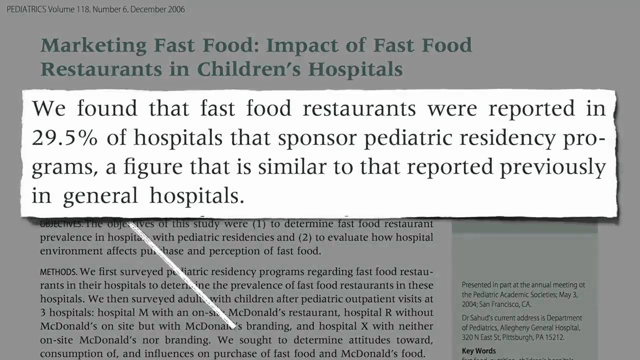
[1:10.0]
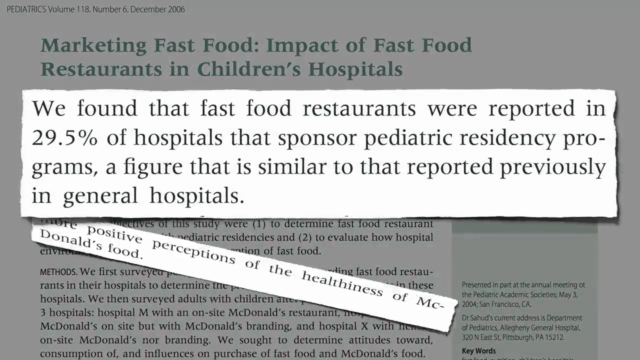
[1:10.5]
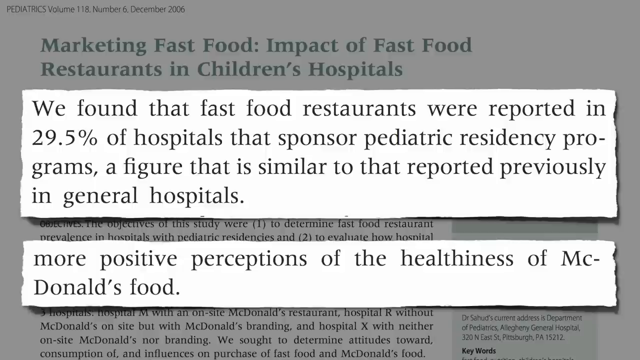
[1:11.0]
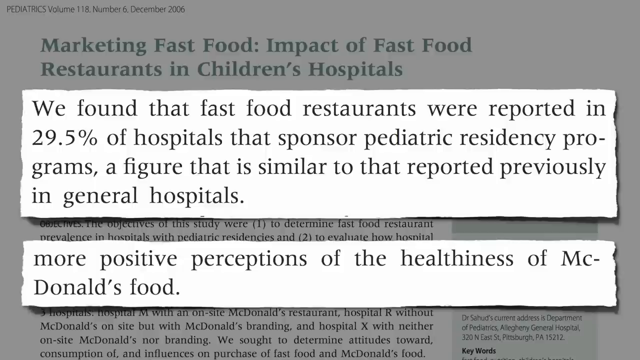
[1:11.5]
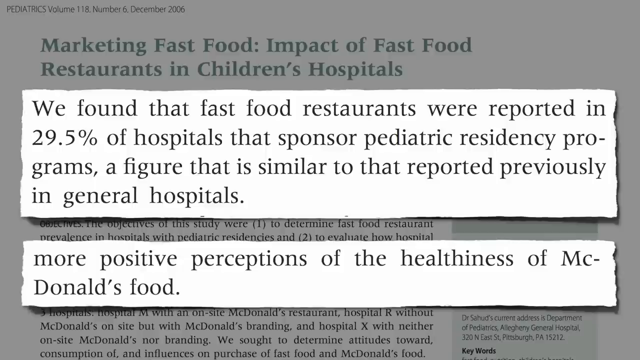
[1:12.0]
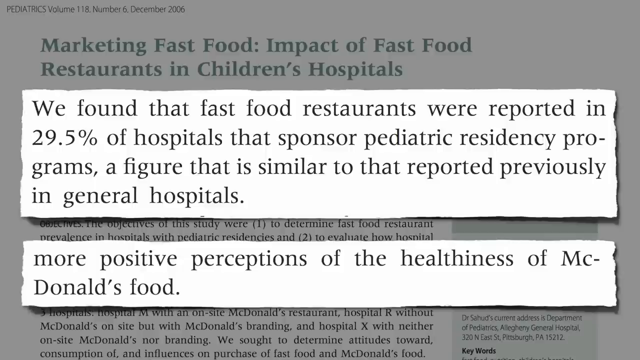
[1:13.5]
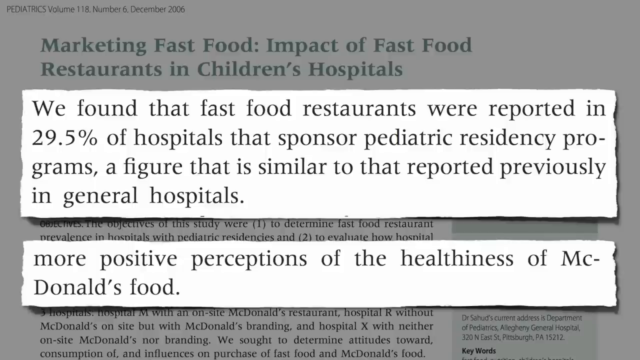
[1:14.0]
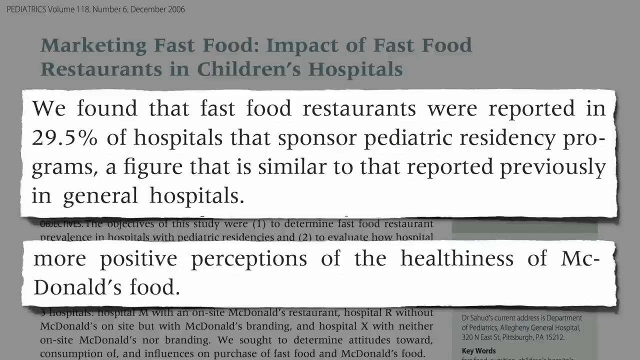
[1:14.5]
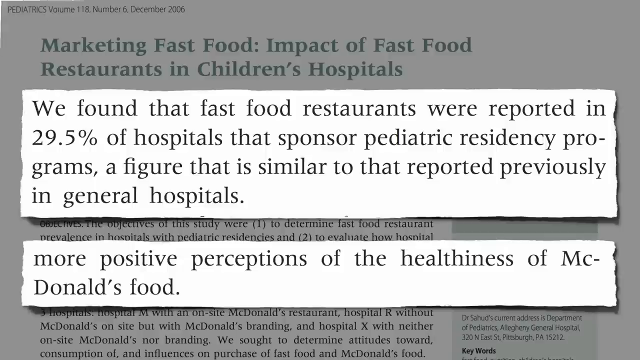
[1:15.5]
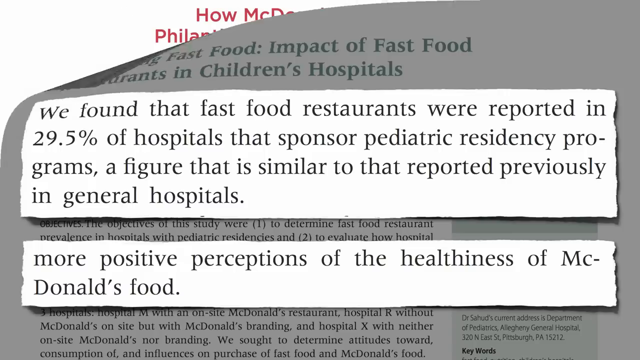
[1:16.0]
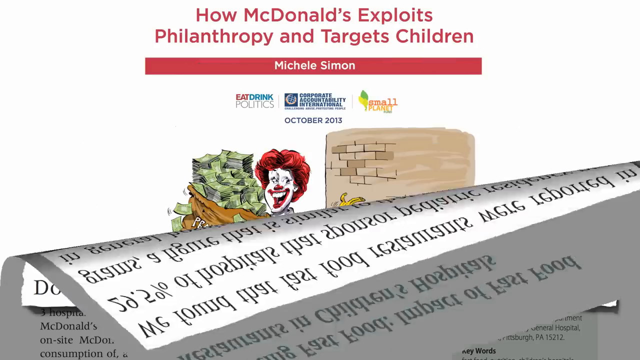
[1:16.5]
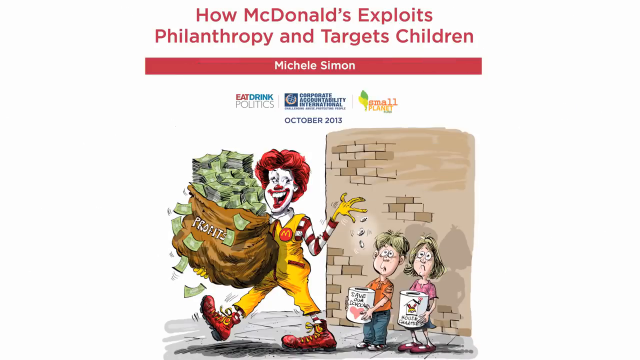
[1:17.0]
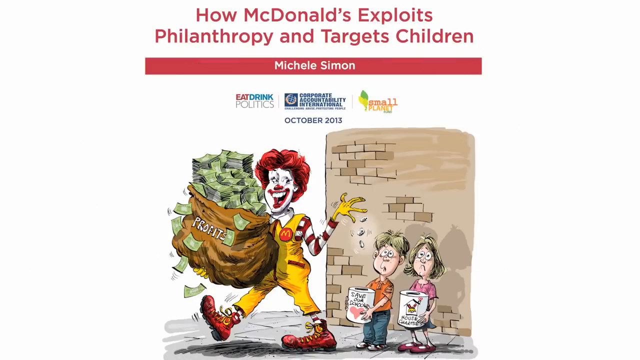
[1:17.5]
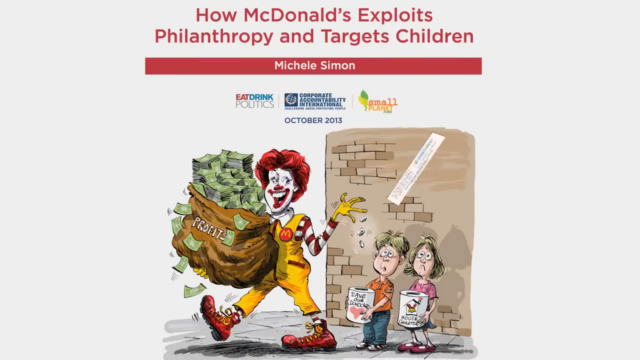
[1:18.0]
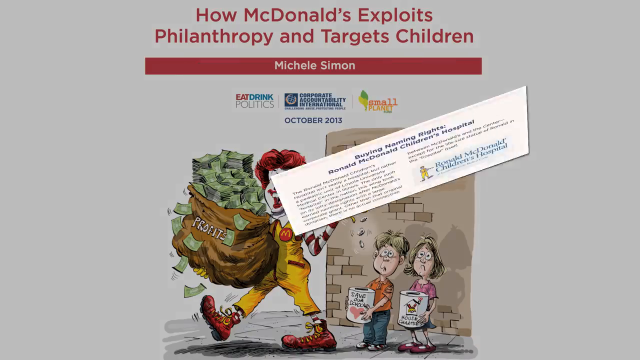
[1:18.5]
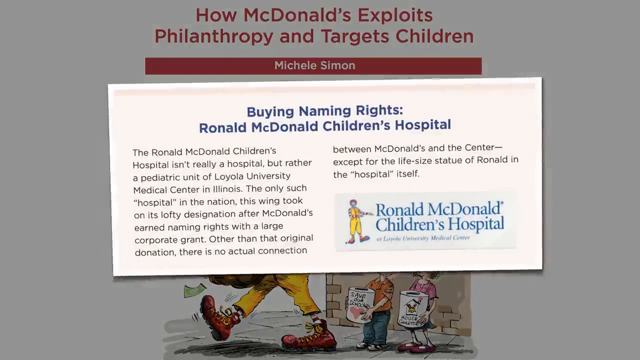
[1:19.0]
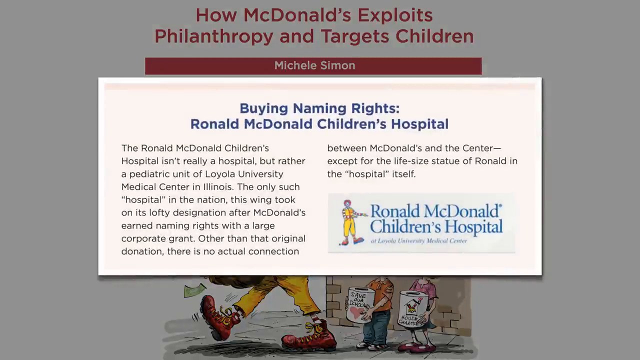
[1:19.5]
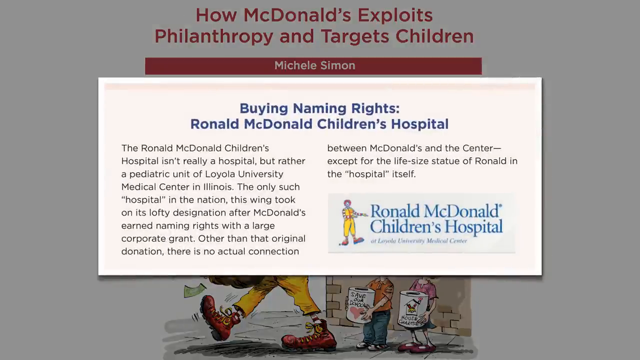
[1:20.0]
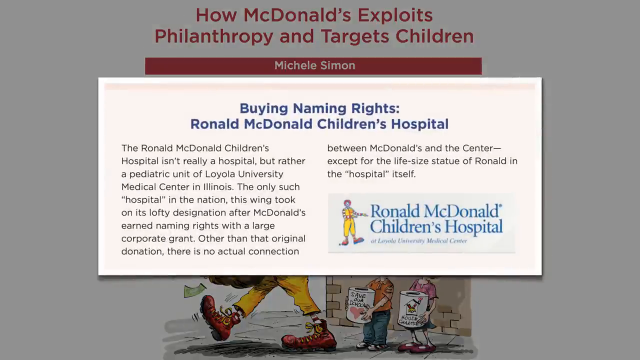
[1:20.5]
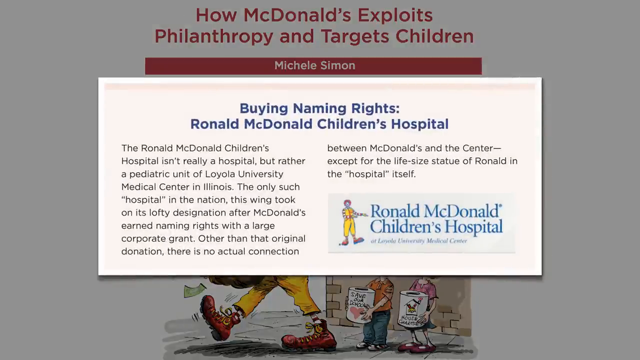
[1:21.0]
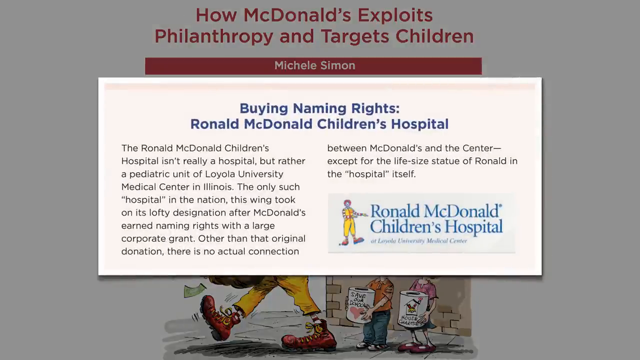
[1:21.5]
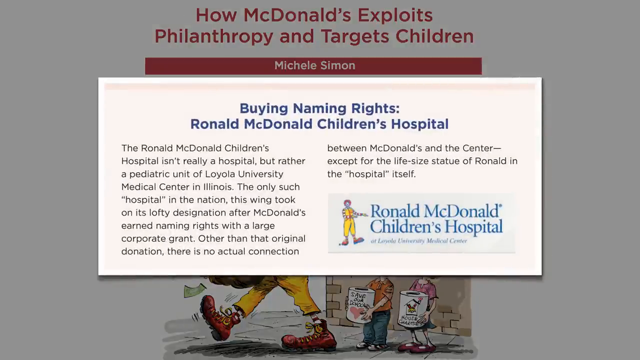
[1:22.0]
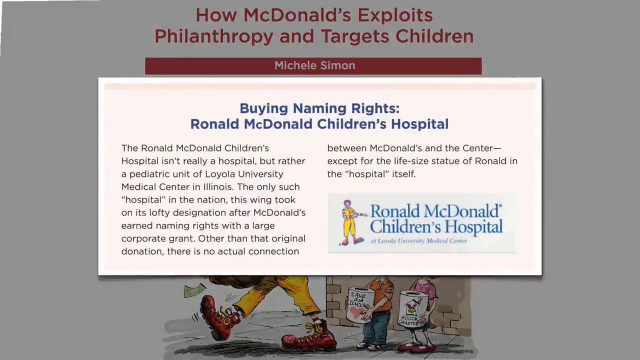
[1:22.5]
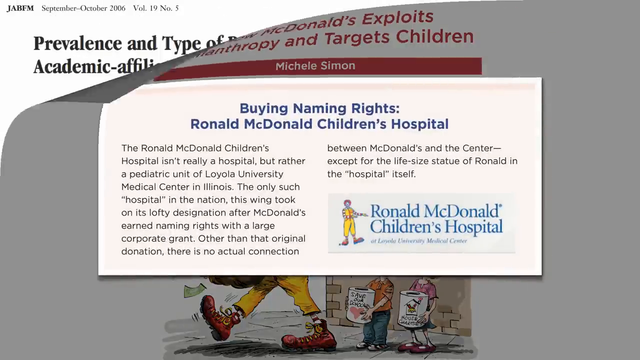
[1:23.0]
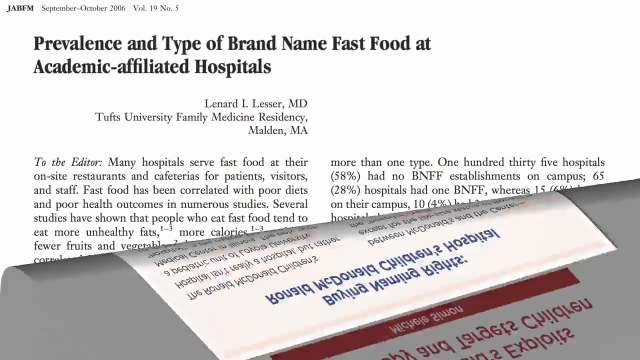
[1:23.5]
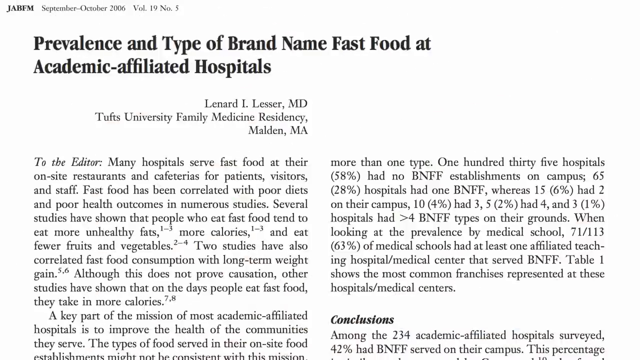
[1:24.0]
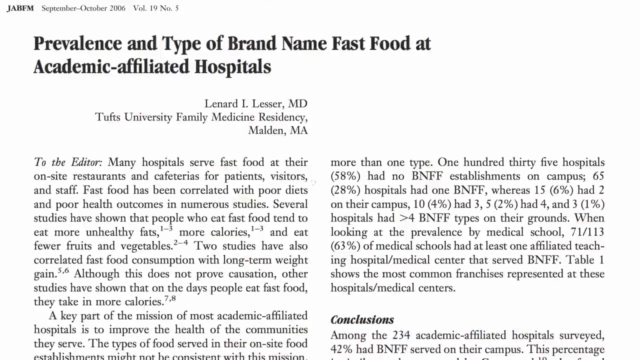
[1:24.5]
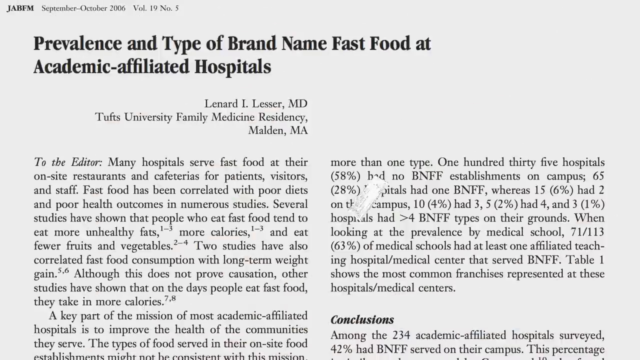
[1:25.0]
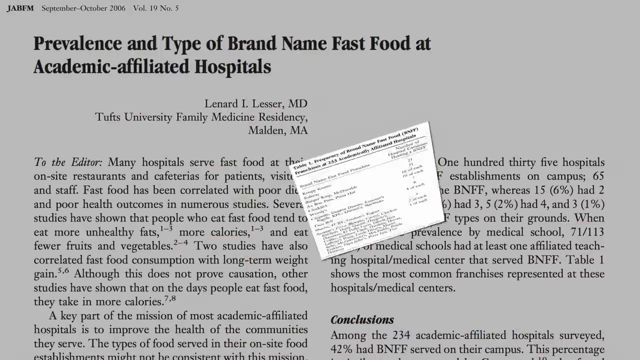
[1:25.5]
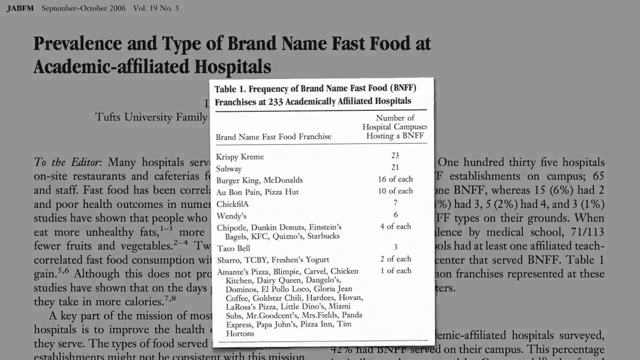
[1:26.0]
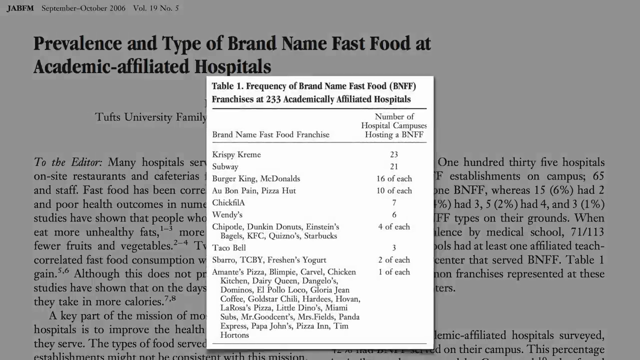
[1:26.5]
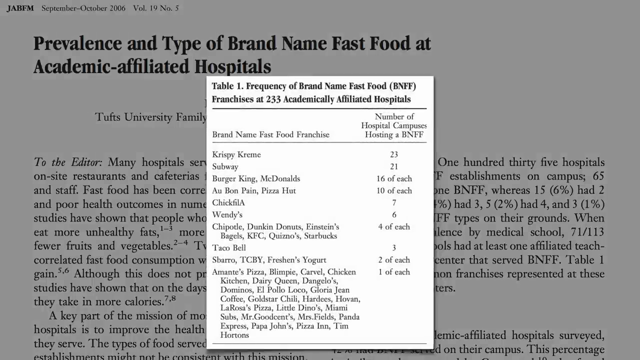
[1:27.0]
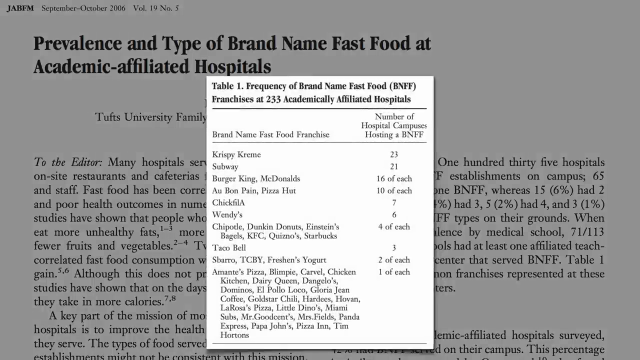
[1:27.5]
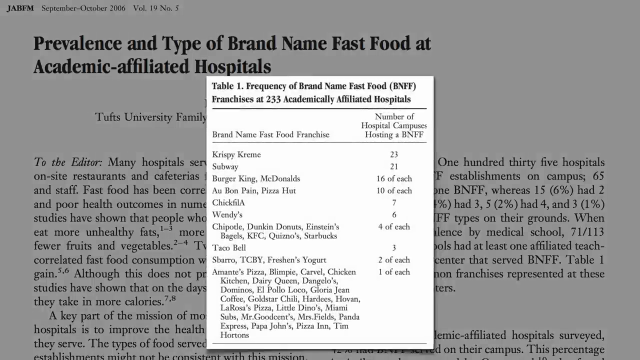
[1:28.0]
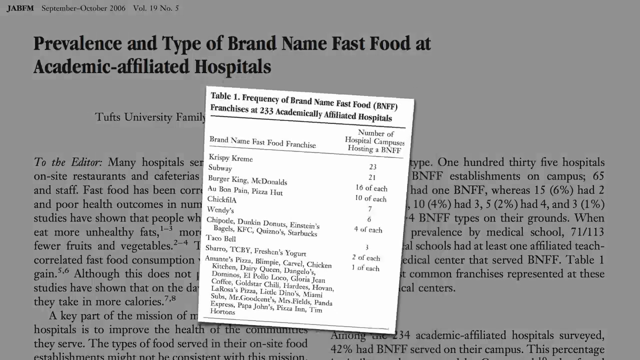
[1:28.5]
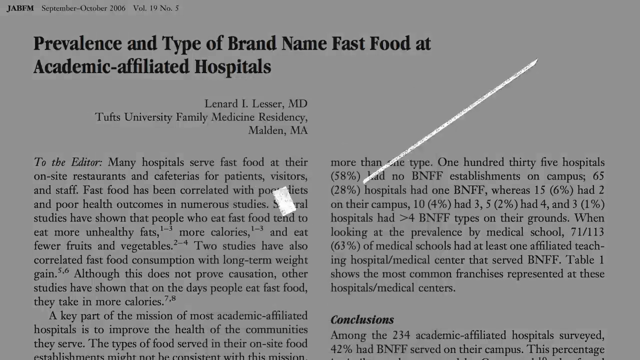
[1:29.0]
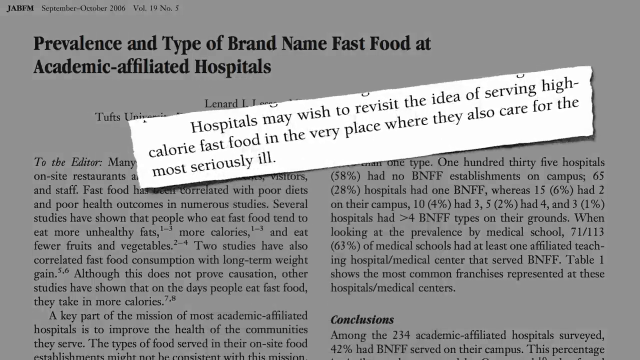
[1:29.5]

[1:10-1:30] The new rectangular cutout over the previous one reads "more positive perceptions of the healthiness of McDonald's foods." The article then falls from left to right out of the screen, and a new image appears titled "how McDonald's exploits philanthropy and targets children." Part of the article is highlighted and comes up, reading "Buying naming rights: Ronald McDonald Children's Hospital." This article has a cartoon image of Ronald McDonald holding a bag of money, with two children sitting in the background against a brick wall, looking scared. It fades from left to right and falls, and a new article replaces it, titled "prevalence and type of brand name fast food at academic-affiliated hospitals." A small square highlighted excerpt from the article comes up, about the frequency of brand name fast food at 233 academically-affiliated hospitals.